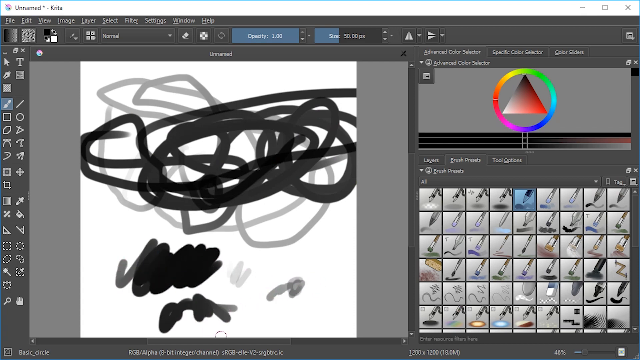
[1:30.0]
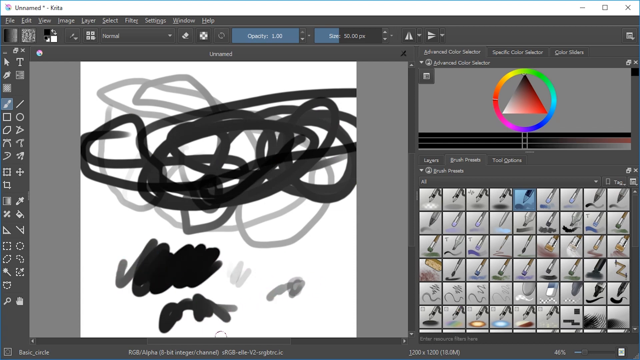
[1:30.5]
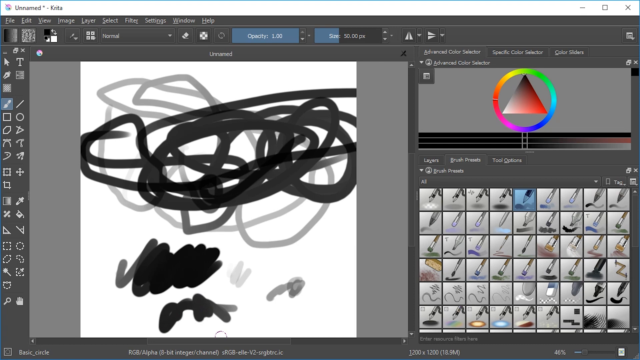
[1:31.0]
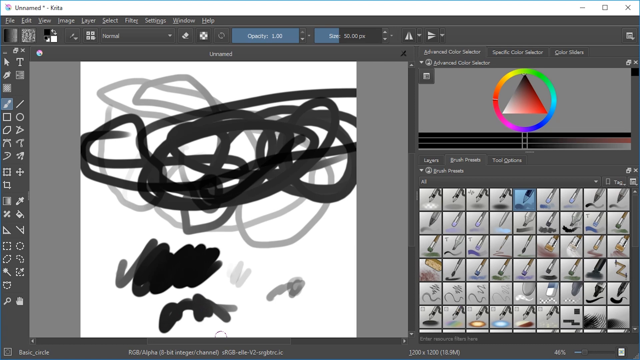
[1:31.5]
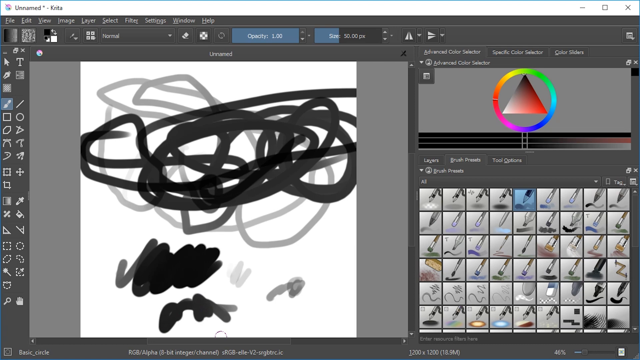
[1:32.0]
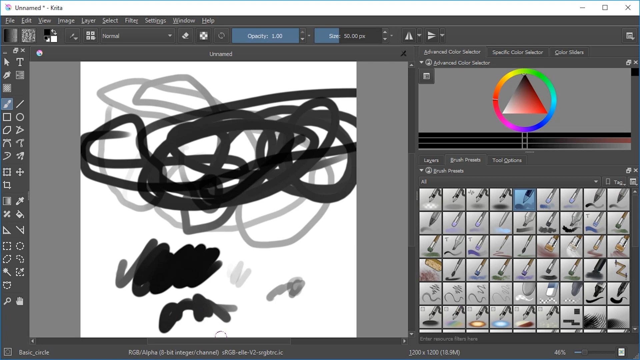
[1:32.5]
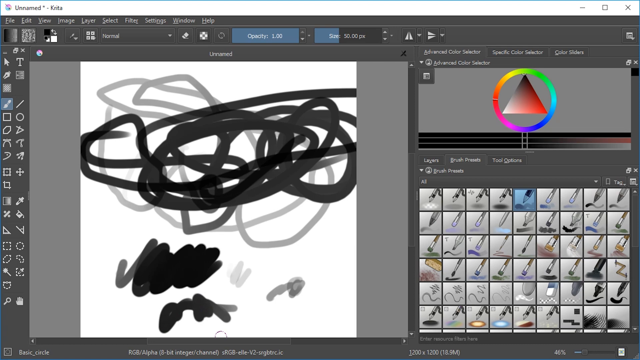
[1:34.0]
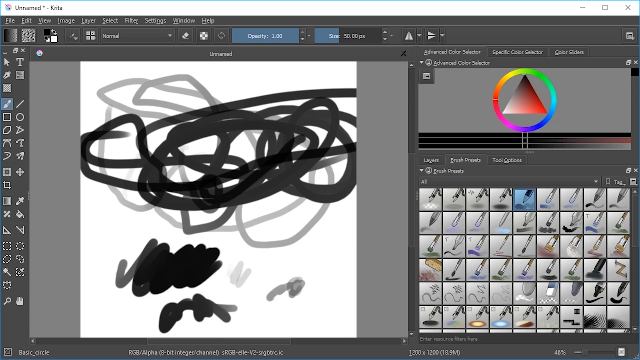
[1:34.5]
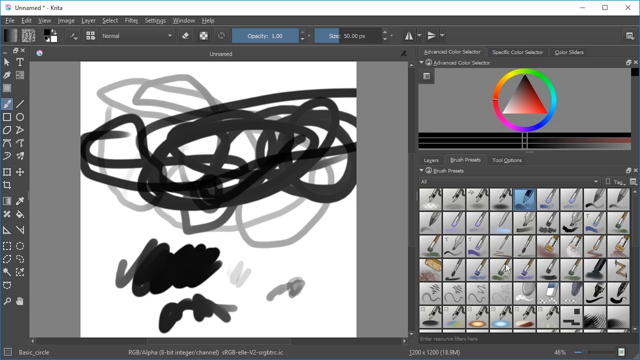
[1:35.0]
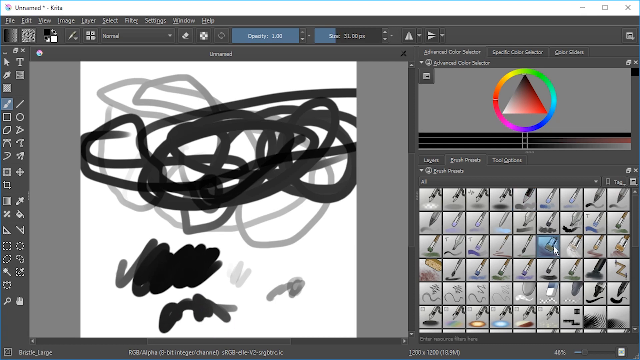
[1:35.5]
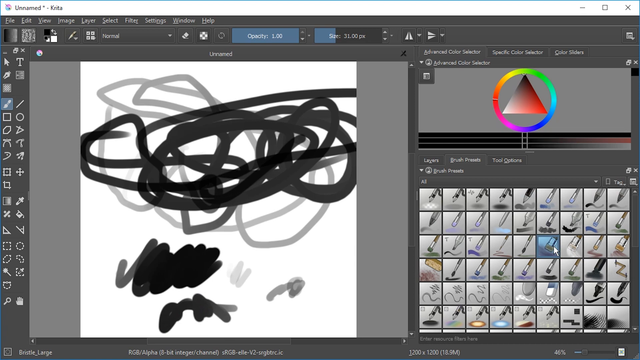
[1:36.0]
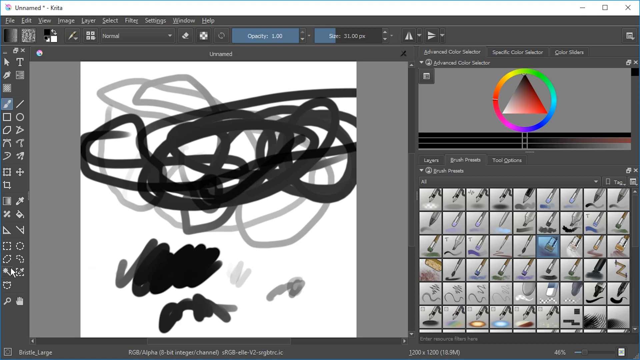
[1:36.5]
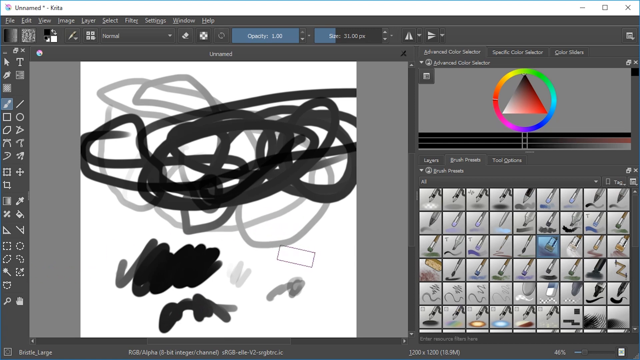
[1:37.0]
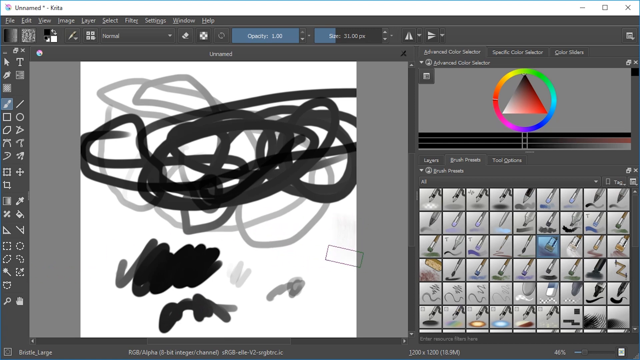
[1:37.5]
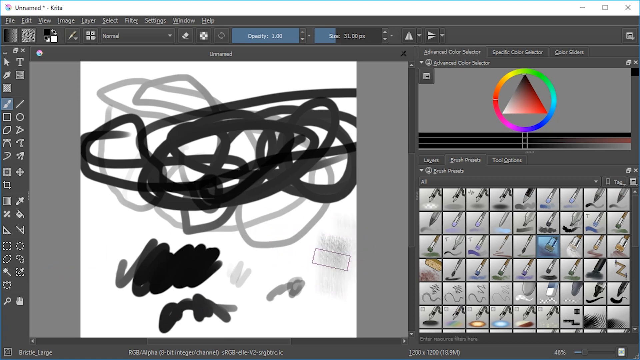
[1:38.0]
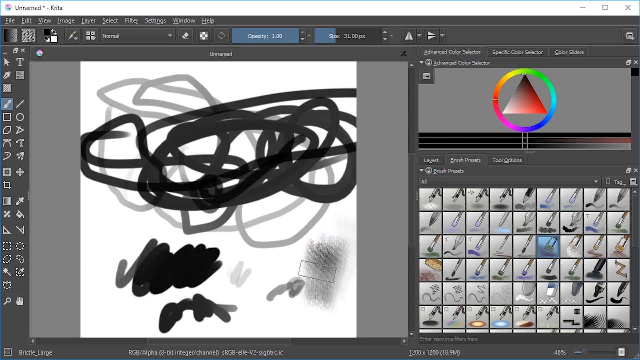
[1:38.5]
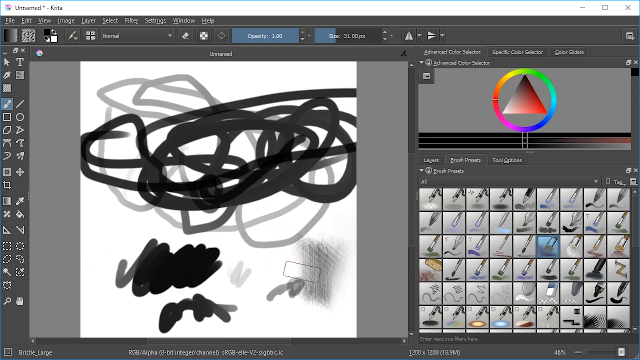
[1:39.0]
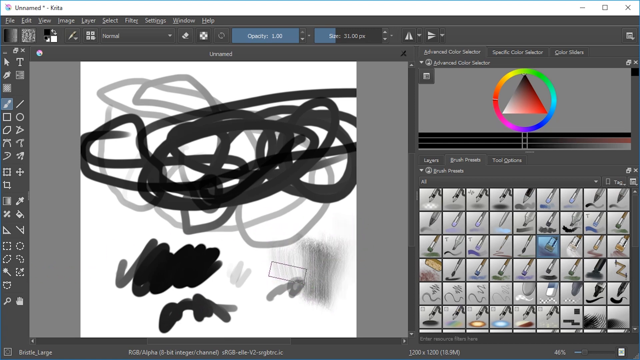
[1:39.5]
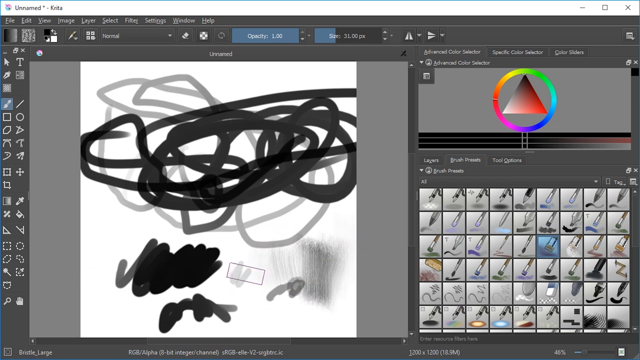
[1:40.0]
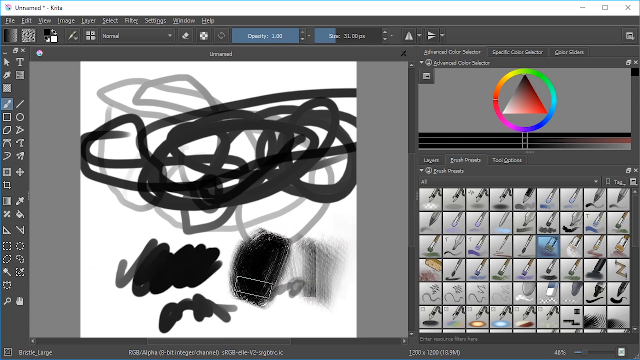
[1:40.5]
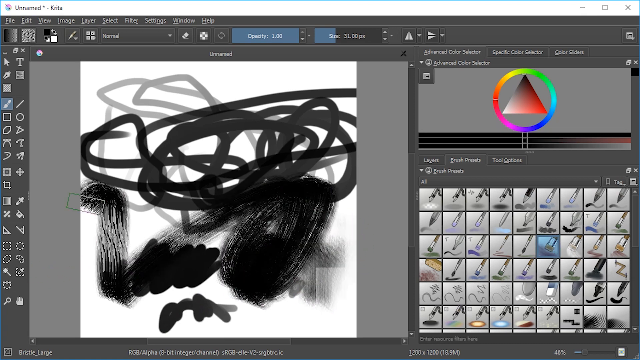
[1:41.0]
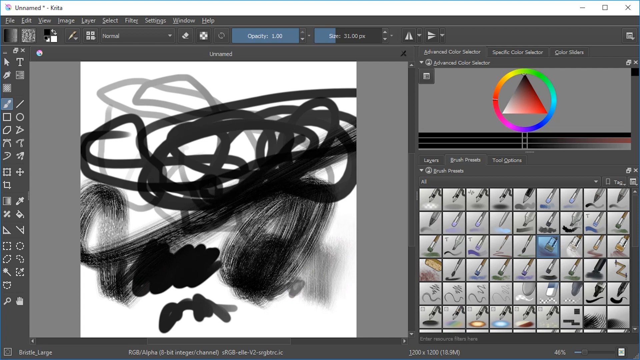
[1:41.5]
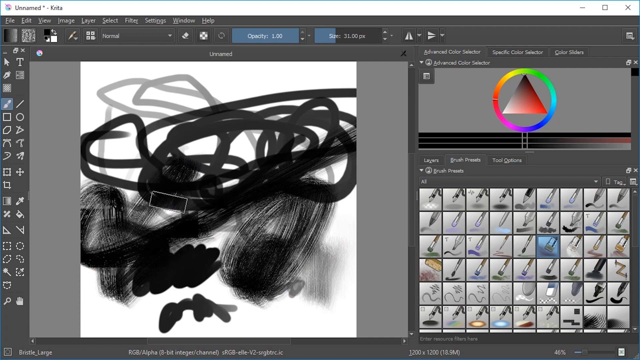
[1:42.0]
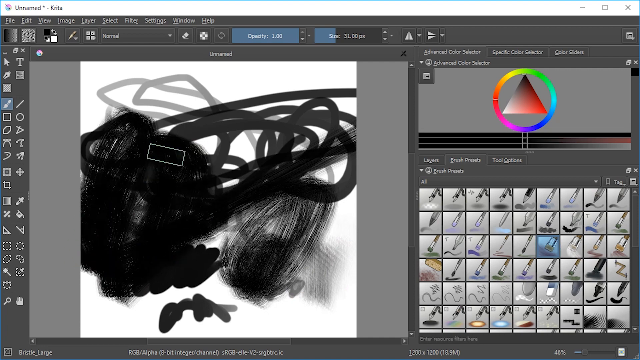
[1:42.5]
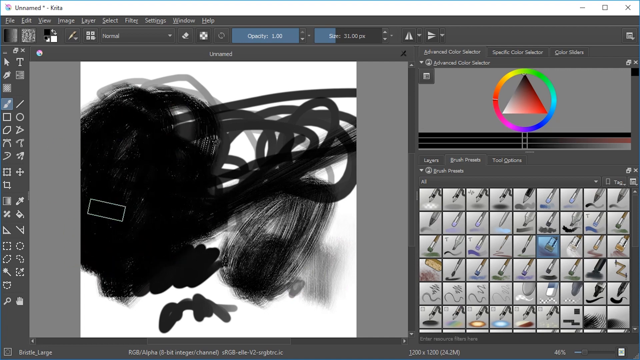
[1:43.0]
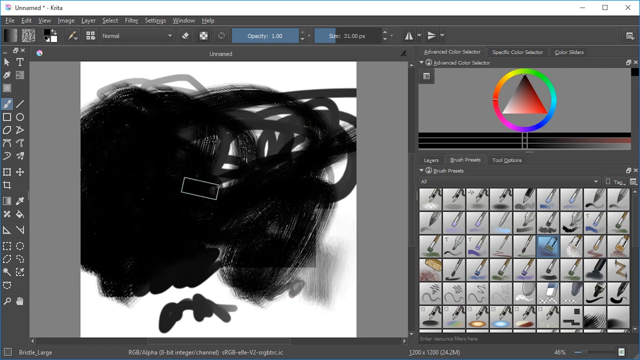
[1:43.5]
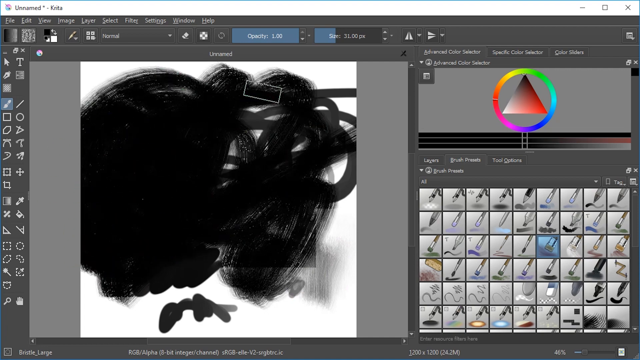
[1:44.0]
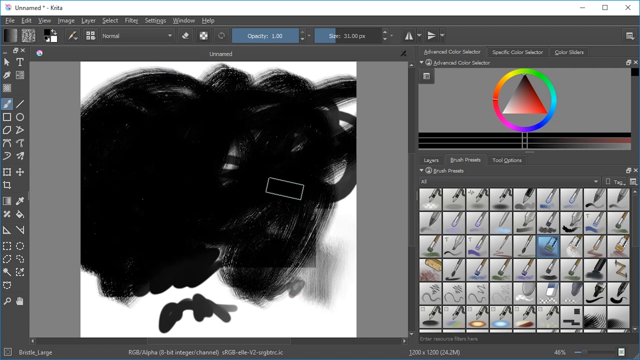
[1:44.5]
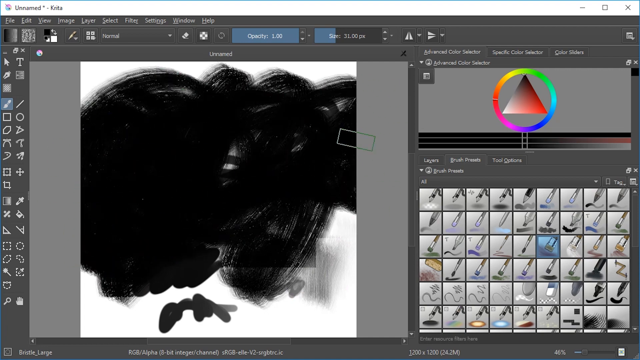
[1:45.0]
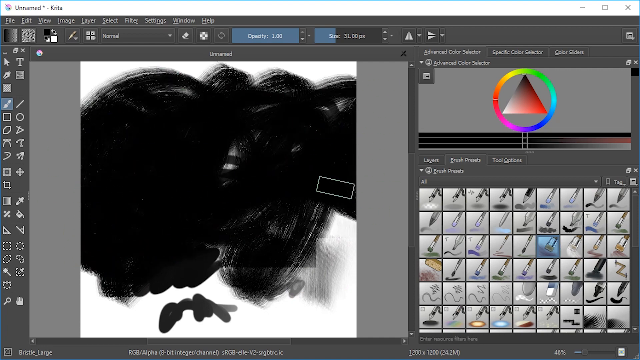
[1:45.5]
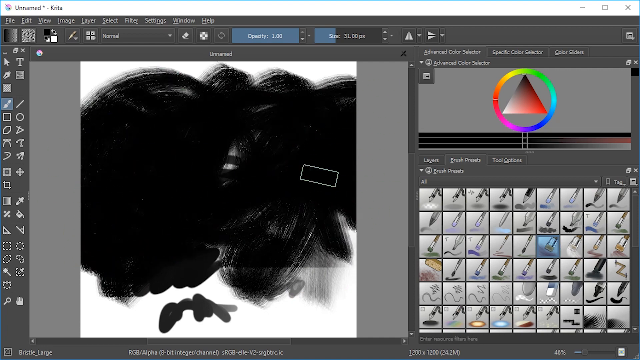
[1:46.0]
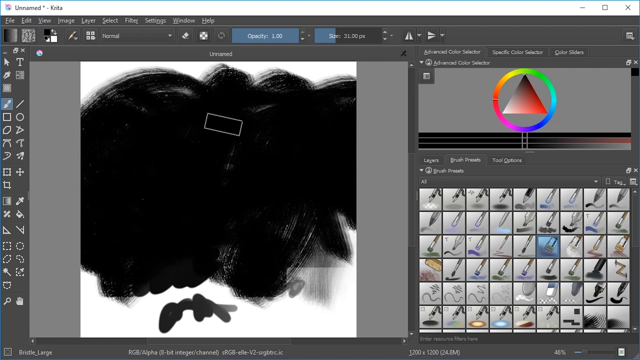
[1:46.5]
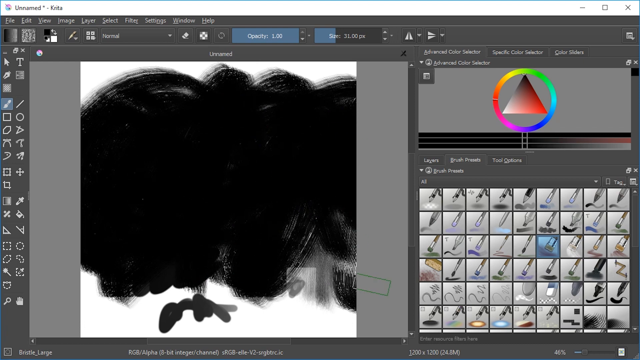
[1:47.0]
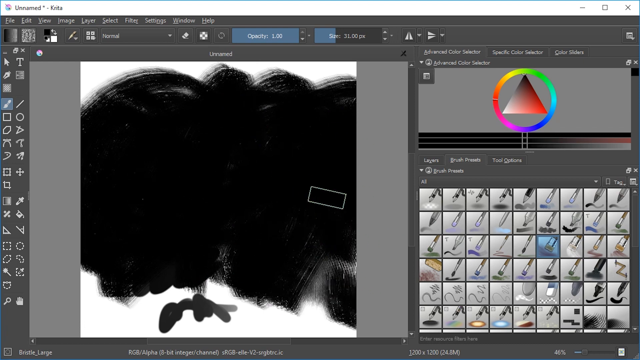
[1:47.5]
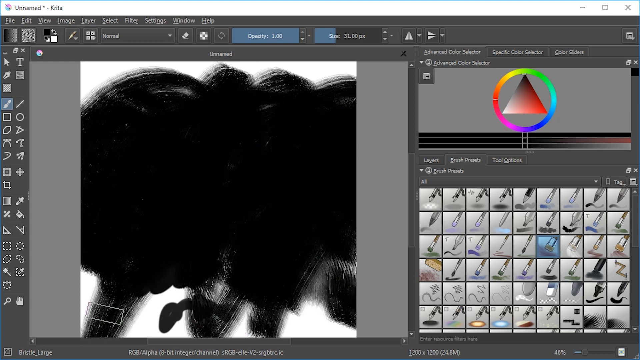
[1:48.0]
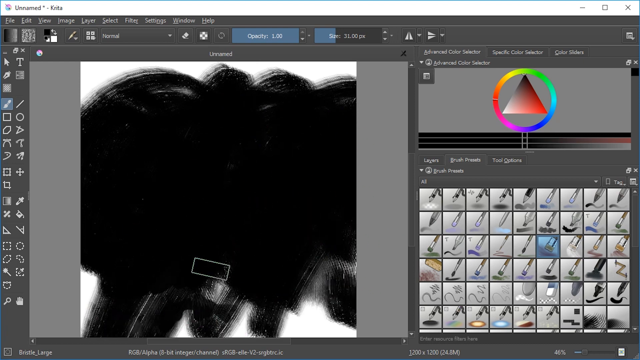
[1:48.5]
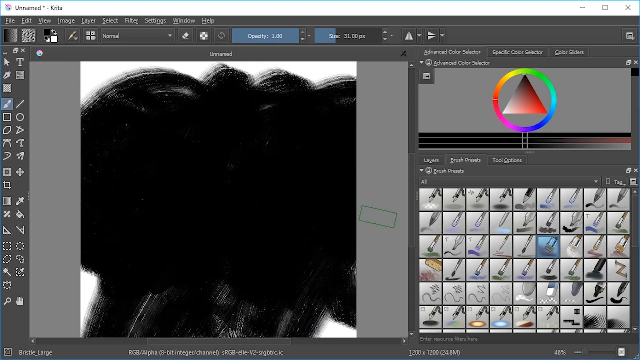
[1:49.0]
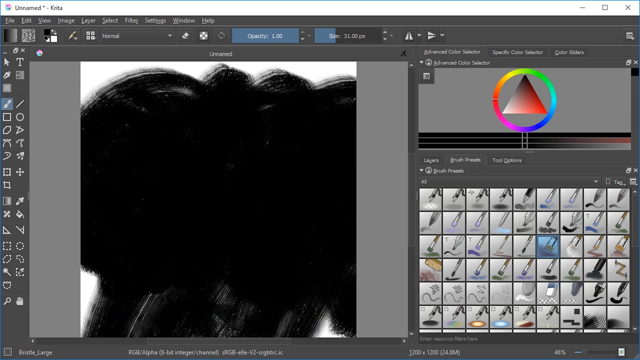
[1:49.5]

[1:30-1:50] One pen is highlighted at the top center of the pen choices. The hand icon moves over and clicks a different pen, in the center of the third row, fourth from the right-hand side, which is kind of like a charcoal pen with more of a charcoal effect. It starts to smear everything around; where it goes over the black areas from the previous work, the charcoal turns black. It basically kind of covers whatever is underneath, which can still kind of be seen through it, until the black scribble in the center turns into a black blob, and after a while it covers basically the entire screen with black.